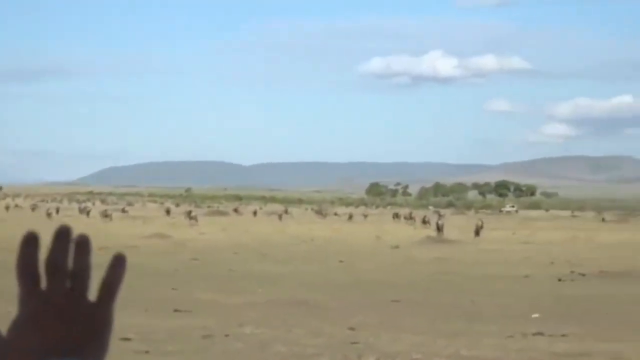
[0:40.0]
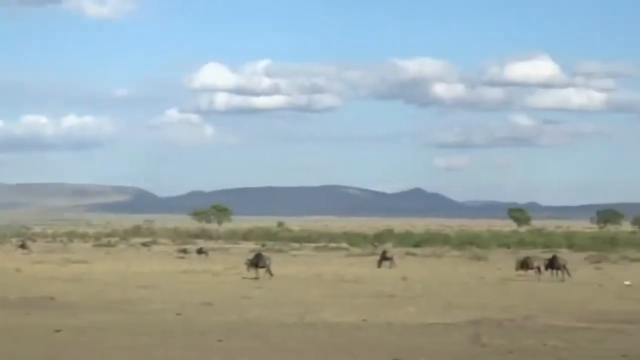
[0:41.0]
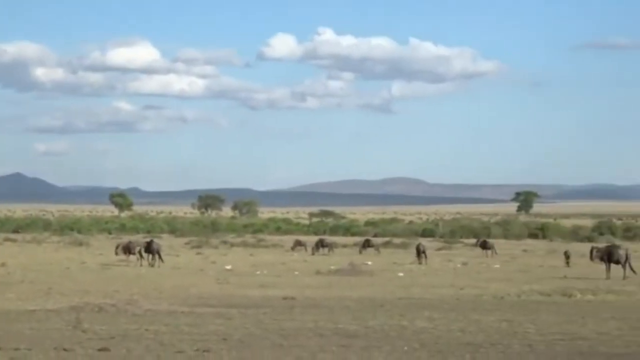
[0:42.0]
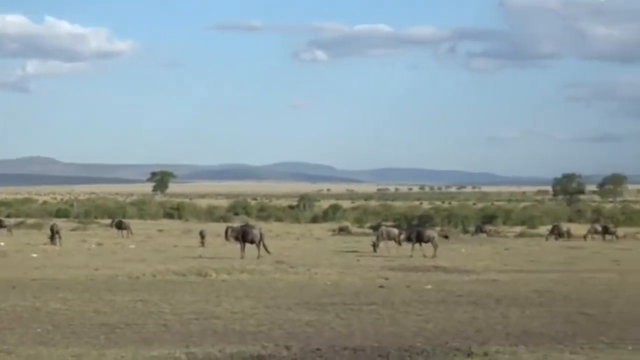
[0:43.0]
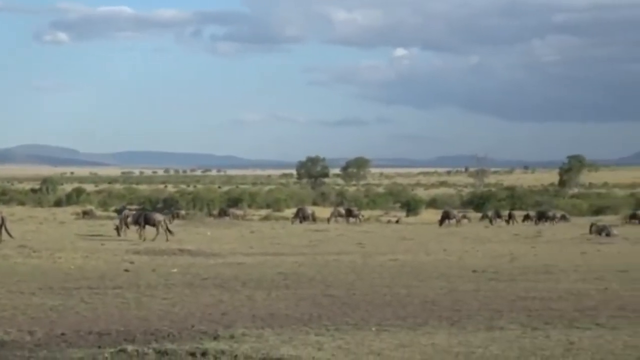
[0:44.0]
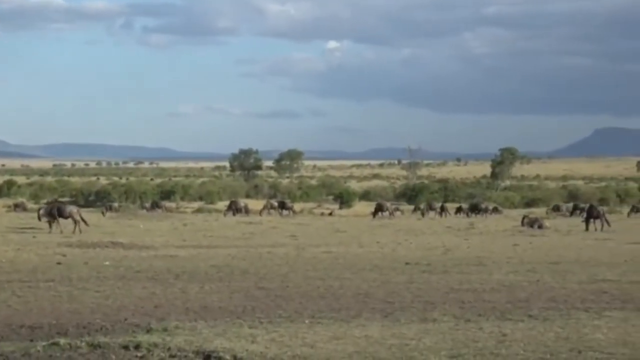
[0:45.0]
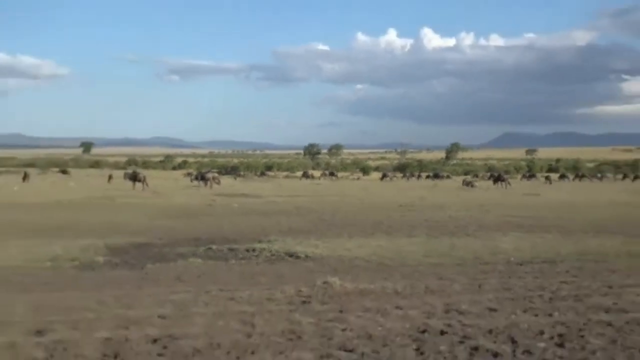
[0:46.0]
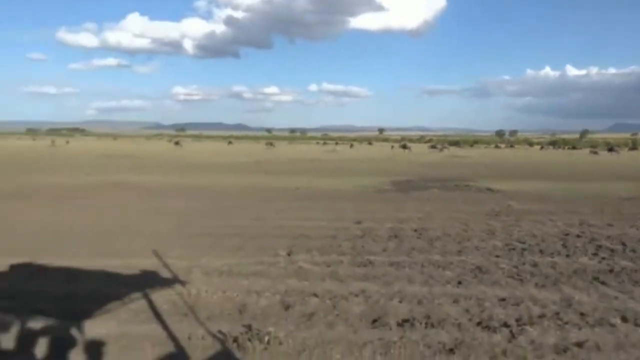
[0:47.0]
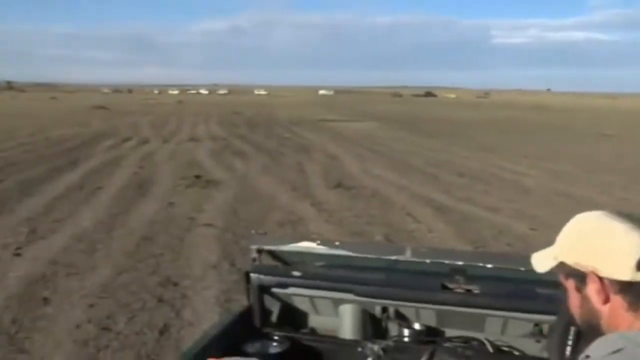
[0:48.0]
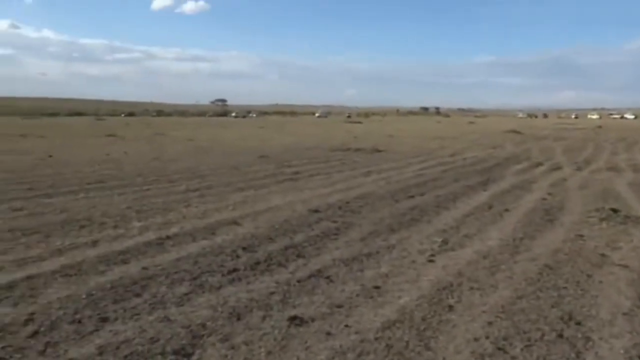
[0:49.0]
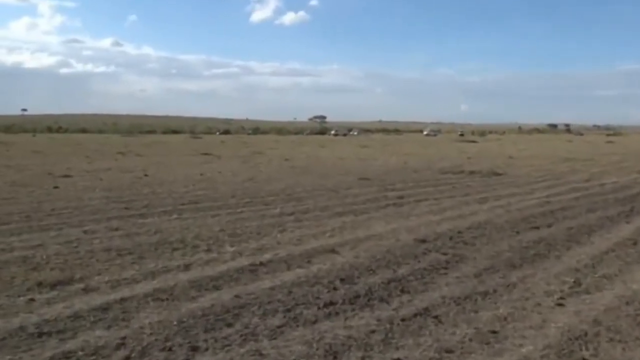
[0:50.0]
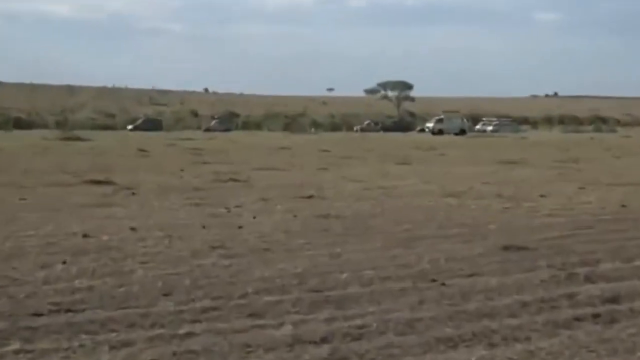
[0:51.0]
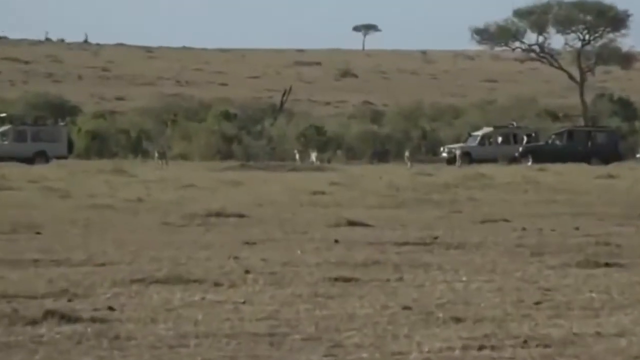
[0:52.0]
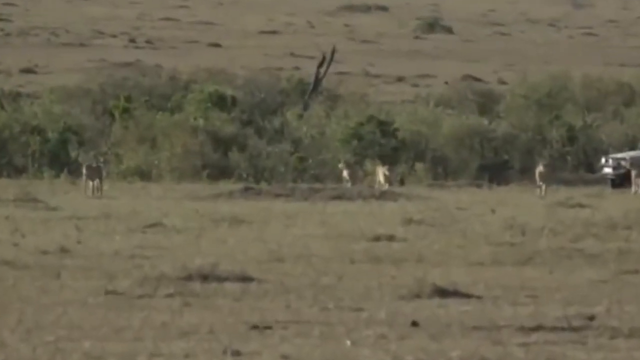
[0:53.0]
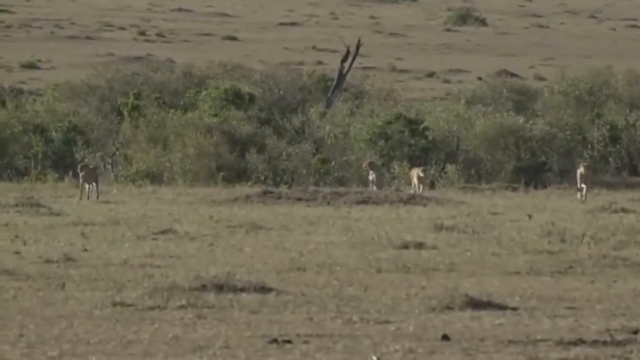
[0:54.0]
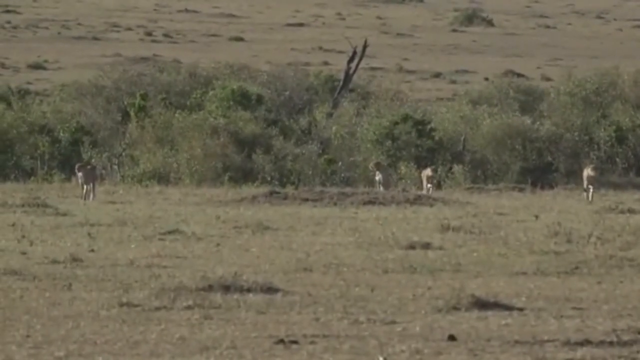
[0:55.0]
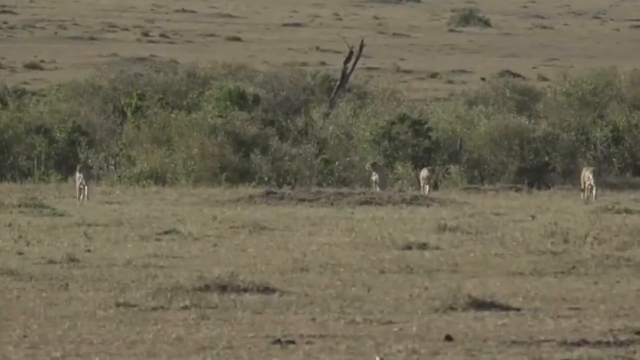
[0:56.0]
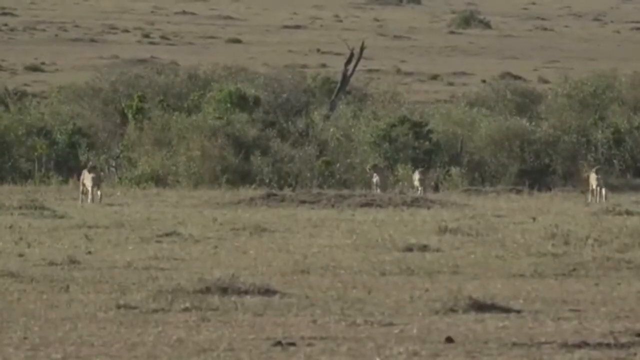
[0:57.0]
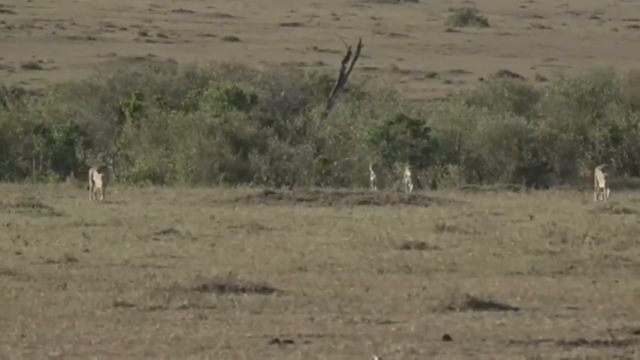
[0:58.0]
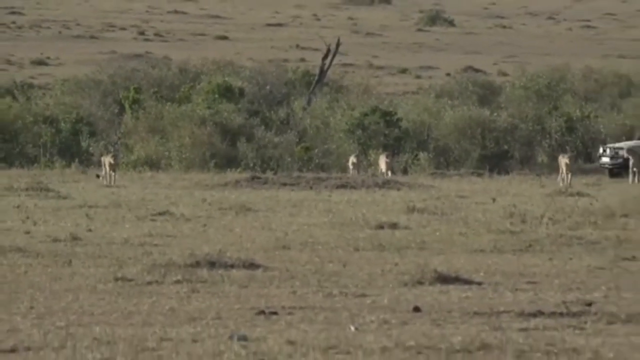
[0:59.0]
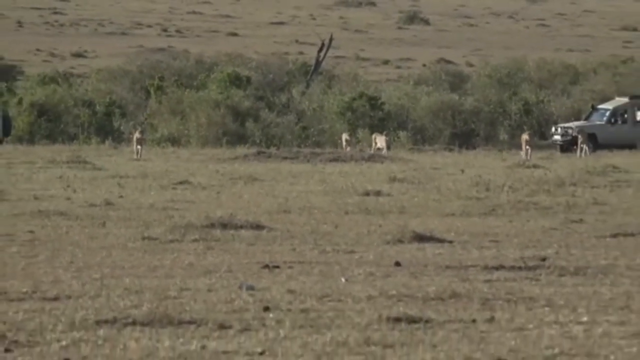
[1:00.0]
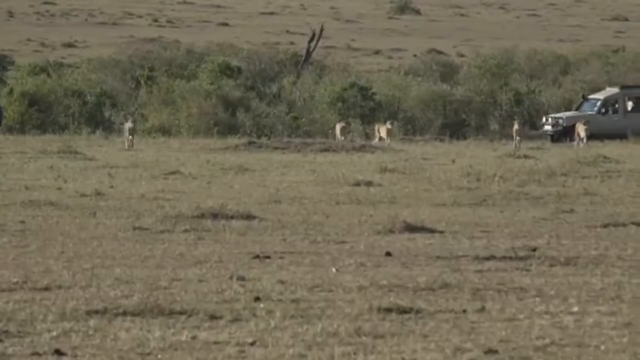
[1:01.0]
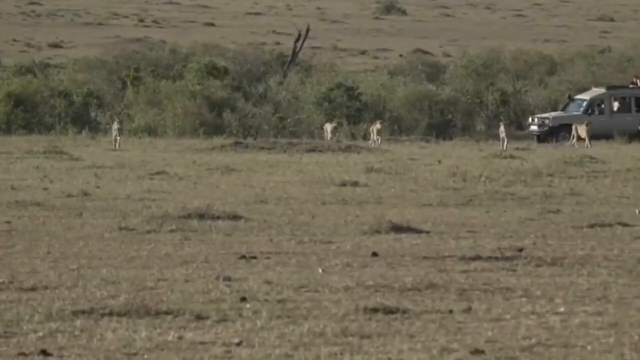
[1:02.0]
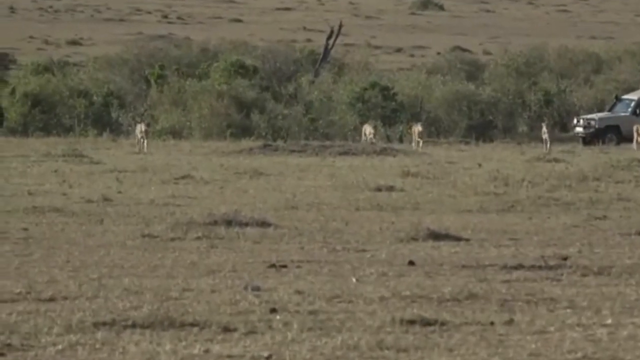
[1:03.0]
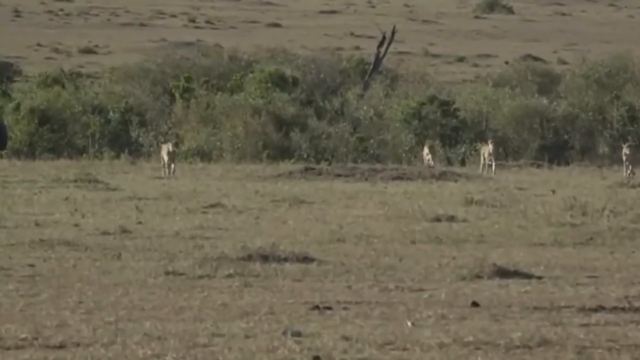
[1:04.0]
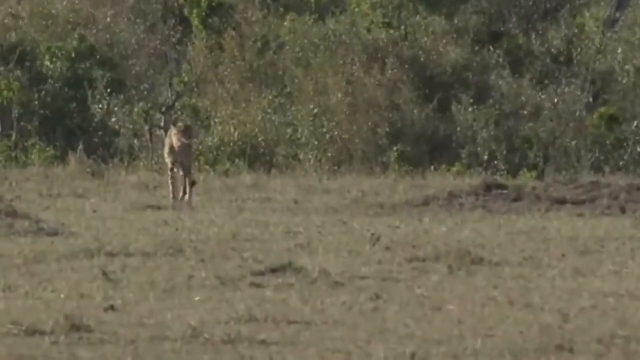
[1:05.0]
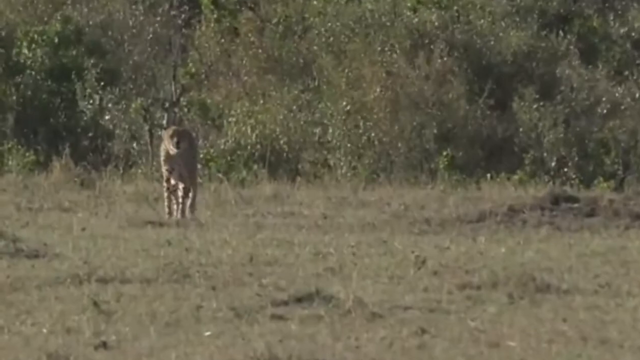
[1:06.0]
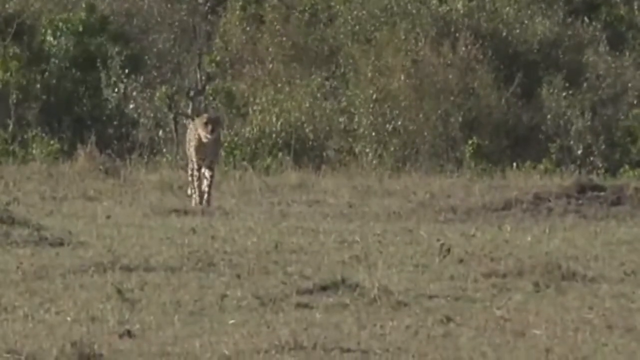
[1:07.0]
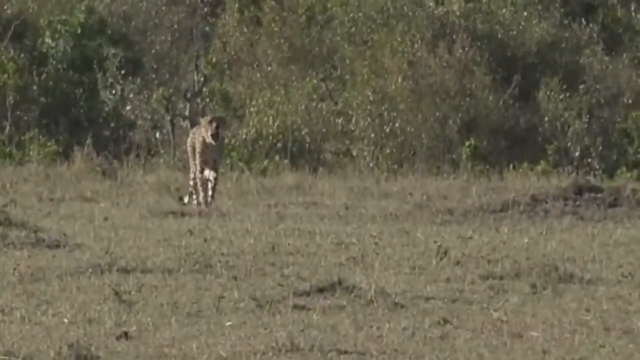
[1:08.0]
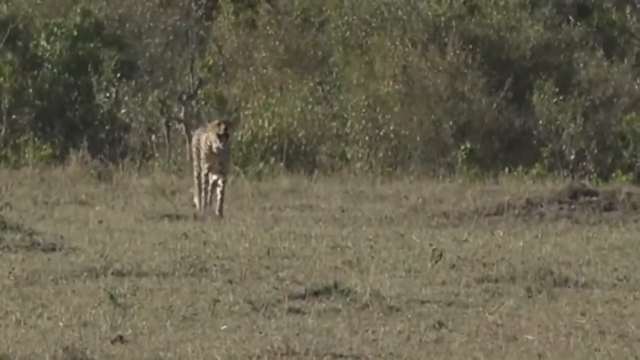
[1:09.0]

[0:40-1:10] A man observes a herd of what looks like maybe buffalo on the right-hand side of a natural environment. He is inside a vehicle, with his head and arm poking out through the roof. The sky above is bright blue with some clouds, and there are mountains in the far distance. The camera then zooms around to the far left-hand side, and when it zooms in closely, a pack of tigers is slowly walking almost in the opposite direction. There are a few vehicles; a white one on the right-hand side of the screen is clearly visible, in quite close proximity to where the tigers are walking across the grass.